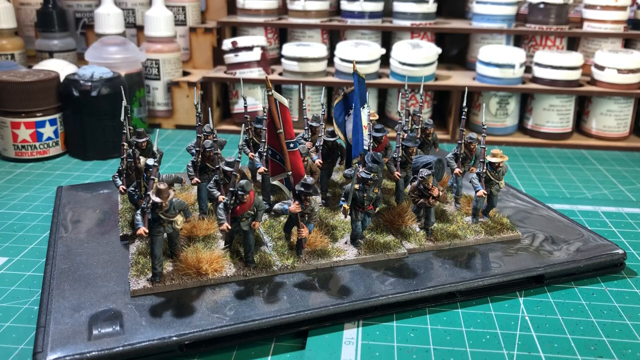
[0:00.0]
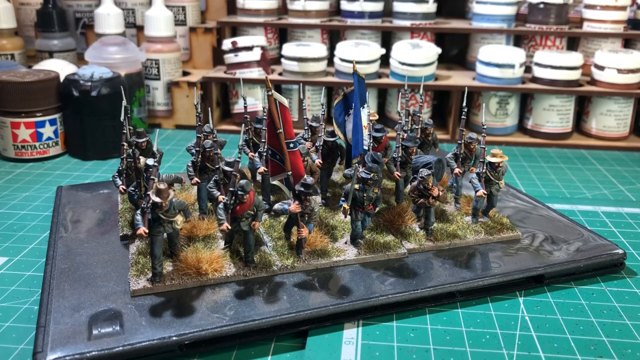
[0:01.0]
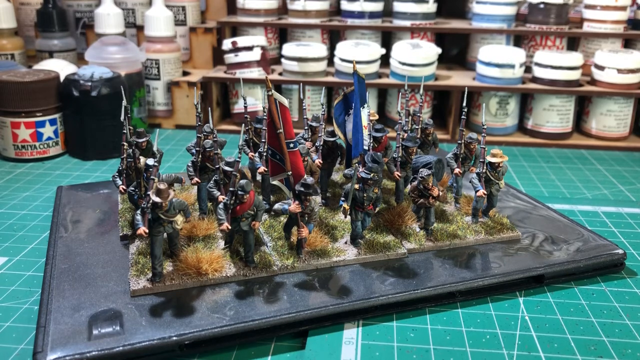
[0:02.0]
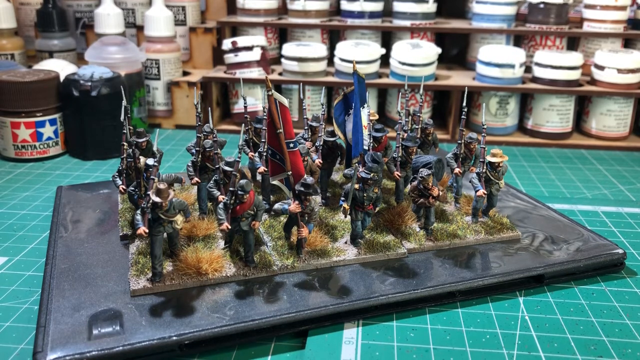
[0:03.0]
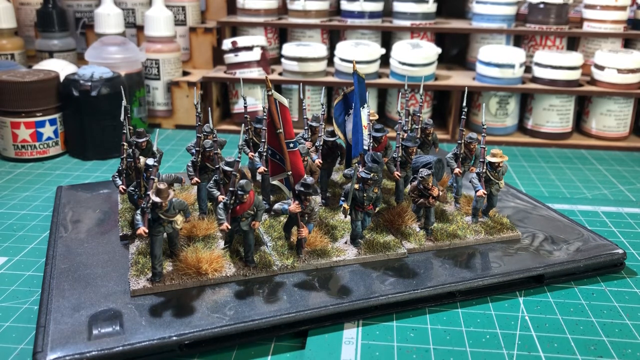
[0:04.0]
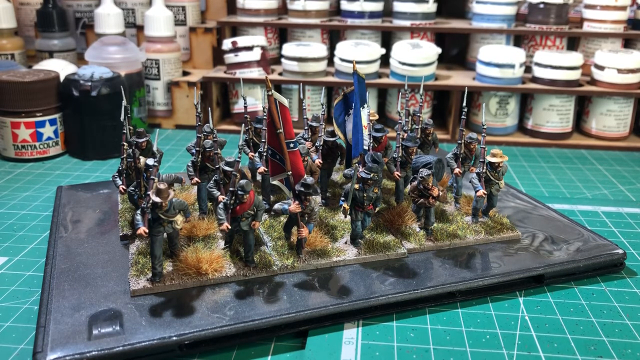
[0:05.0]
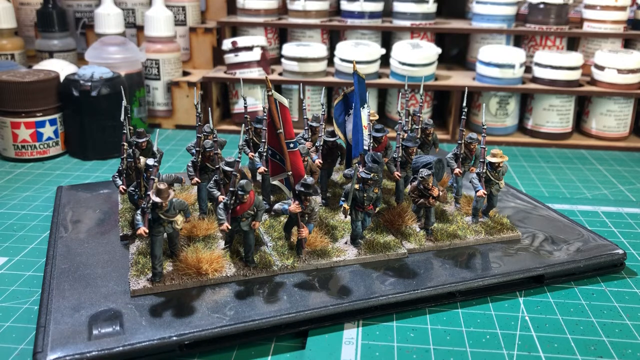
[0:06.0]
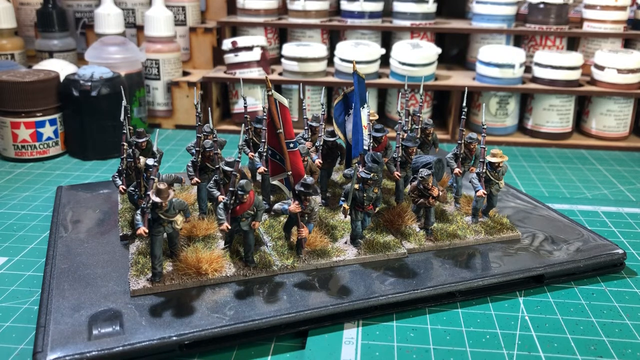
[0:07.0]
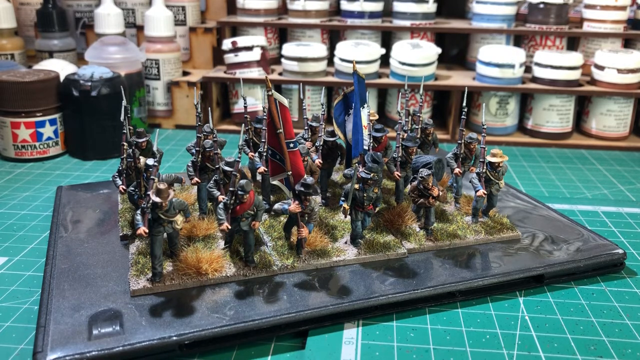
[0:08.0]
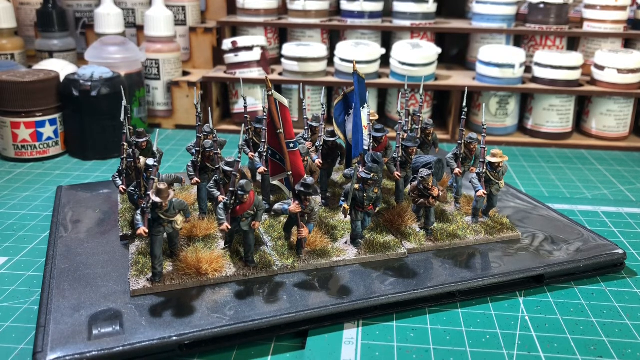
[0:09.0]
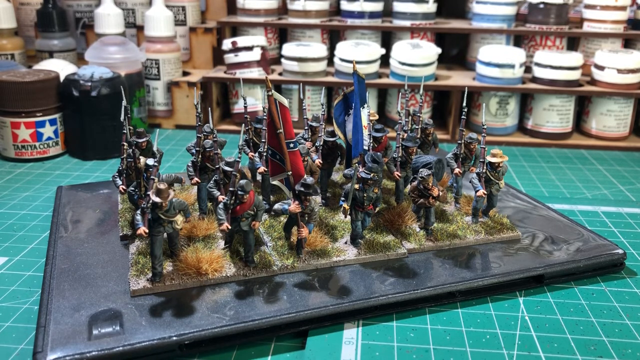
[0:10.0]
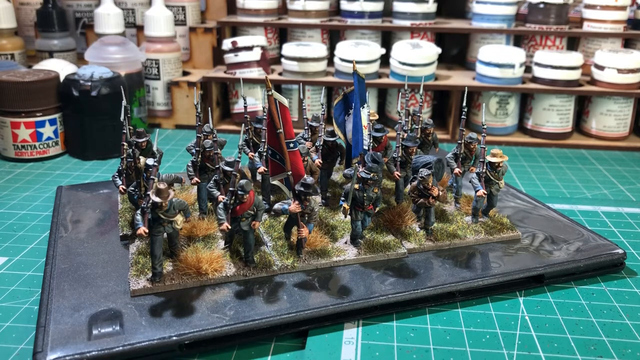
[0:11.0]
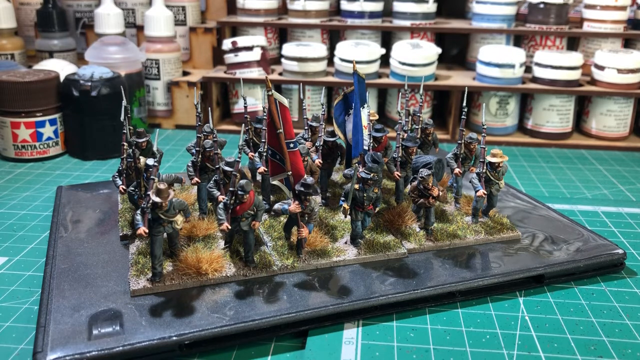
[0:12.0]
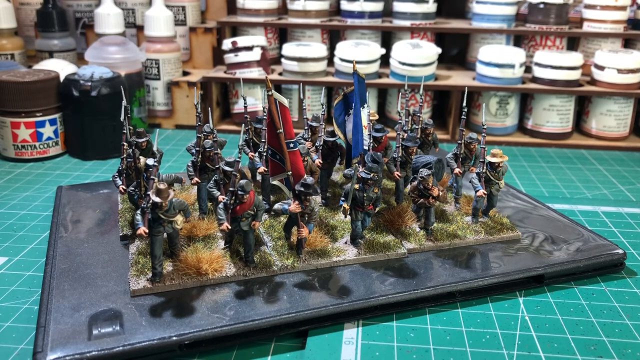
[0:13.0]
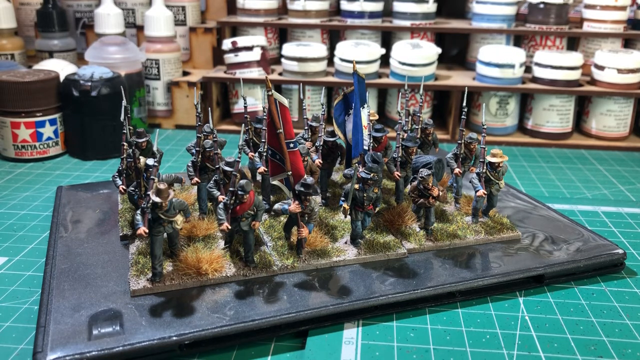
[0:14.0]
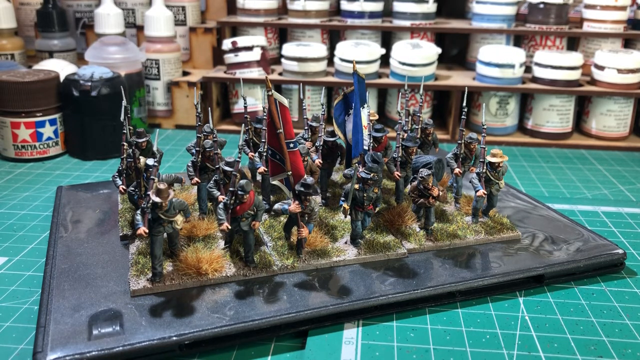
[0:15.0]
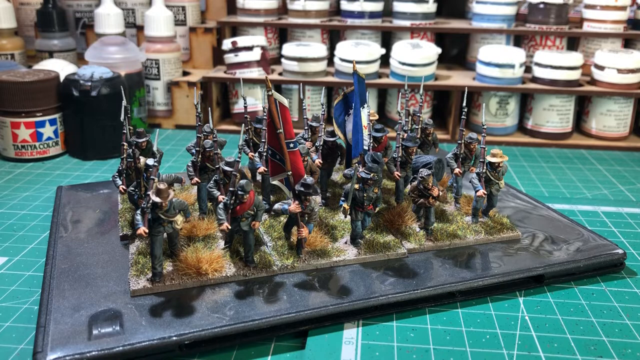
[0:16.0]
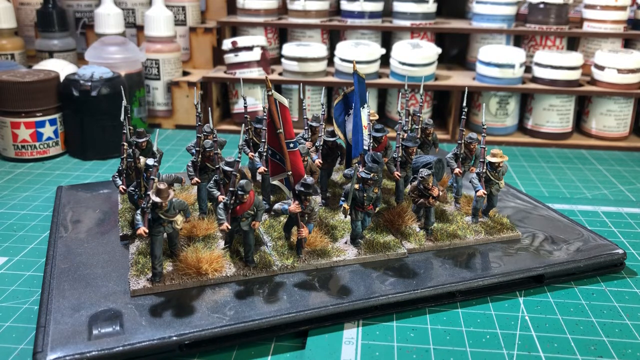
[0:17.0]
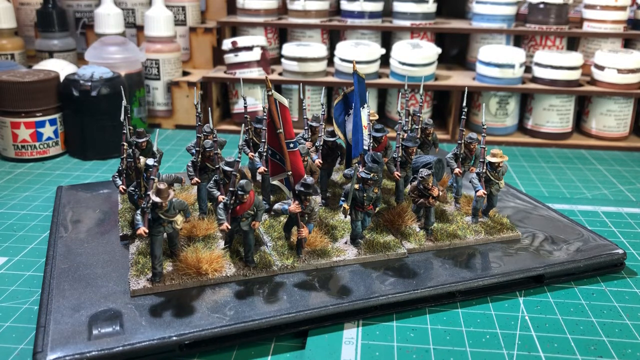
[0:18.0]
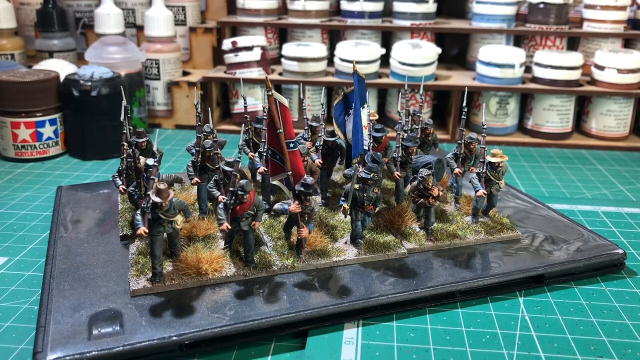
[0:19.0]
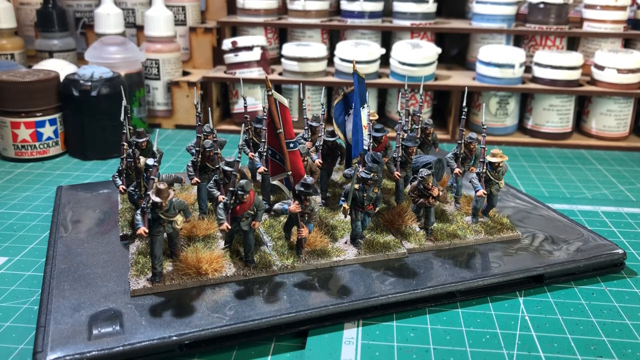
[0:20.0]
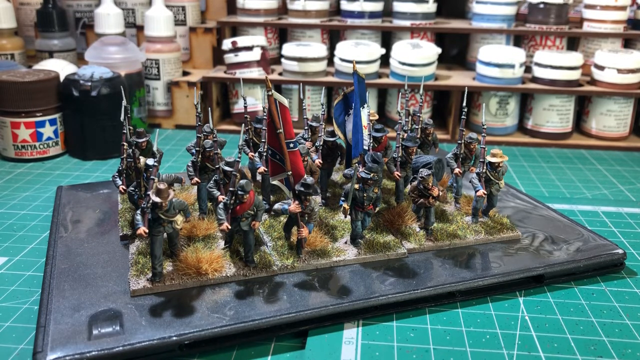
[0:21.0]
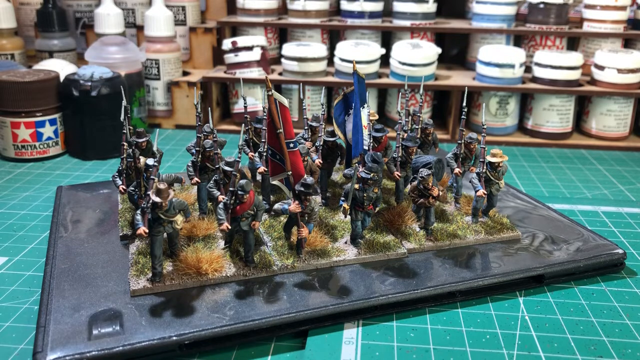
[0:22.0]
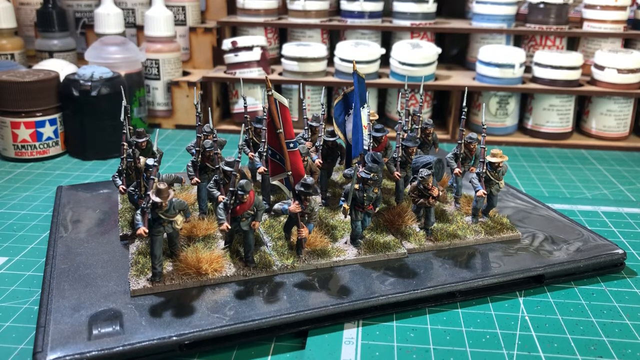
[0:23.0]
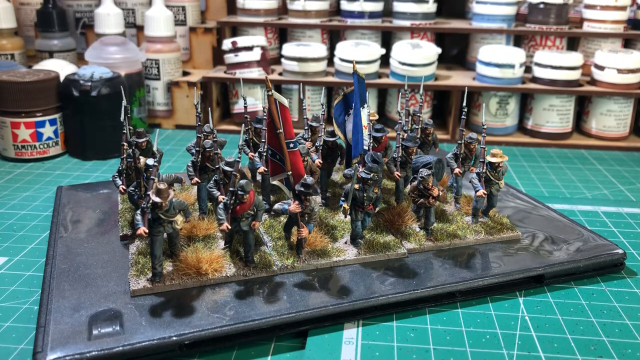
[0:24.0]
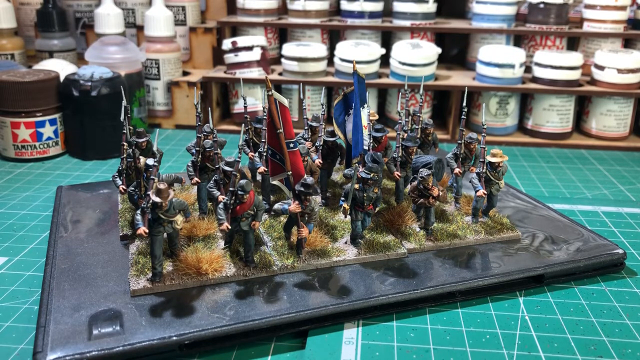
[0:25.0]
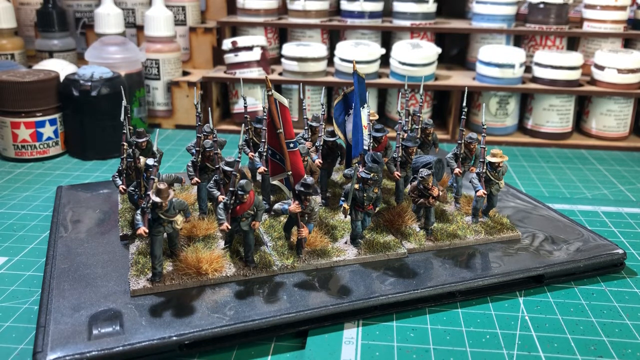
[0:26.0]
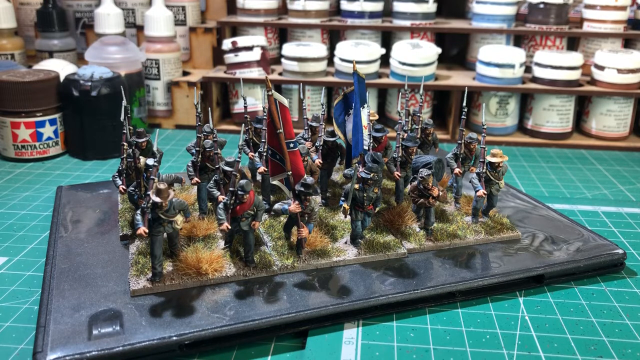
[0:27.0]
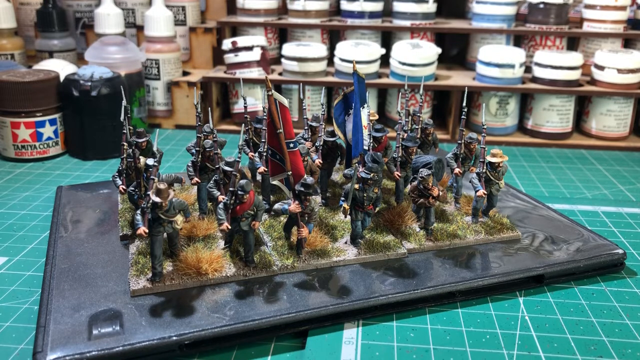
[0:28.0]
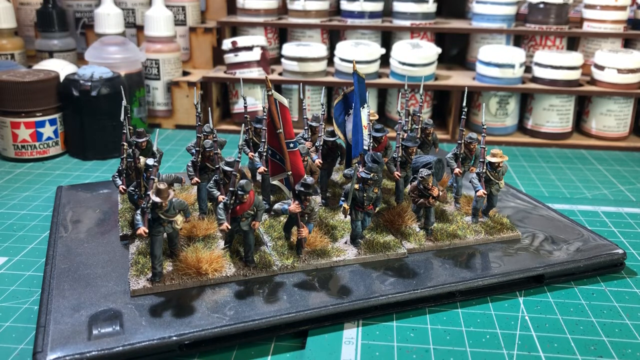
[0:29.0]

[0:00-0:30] A static image shows figurines on a table in a workshop; the figurines might be Confederacy figurines. Behind them are paint canisters or pots, with paints of different colours. There are approximately 15 to 20 figurines. Some carry flags, and some, or most, carry weapons. The setting is likely somebody's workshop, possibly where this figurine set is painted. There are no humans in the image.